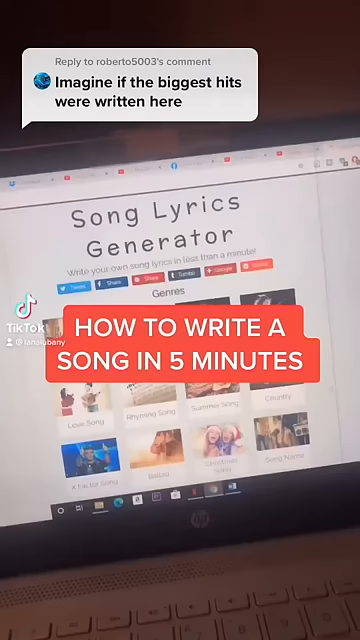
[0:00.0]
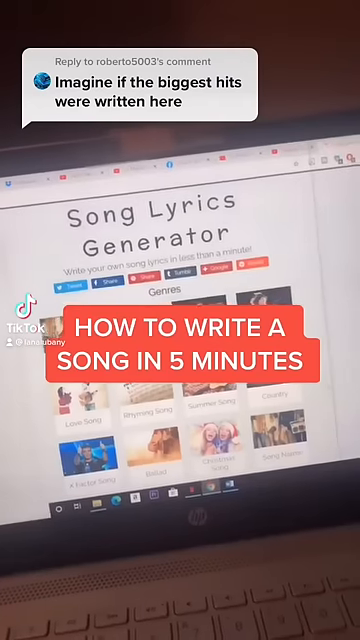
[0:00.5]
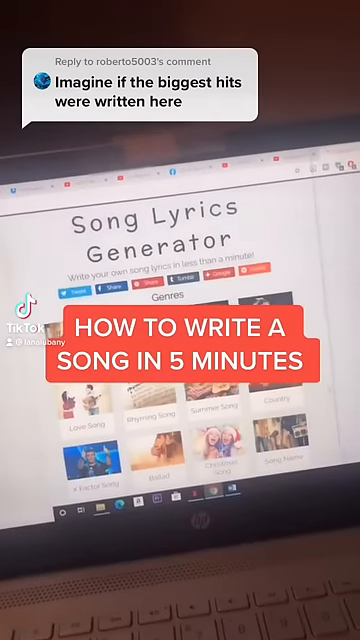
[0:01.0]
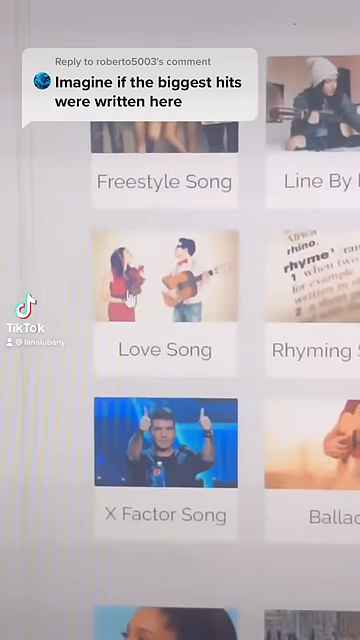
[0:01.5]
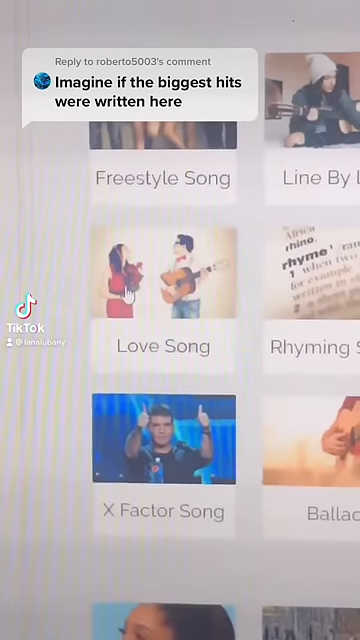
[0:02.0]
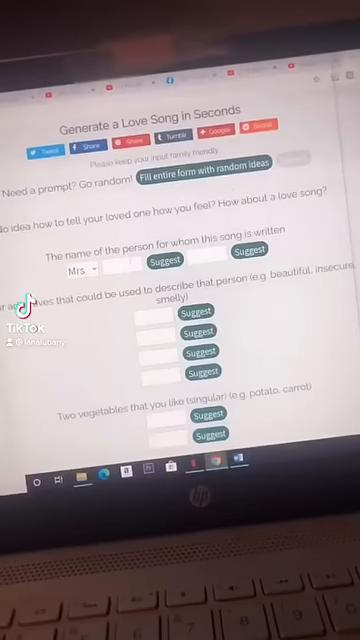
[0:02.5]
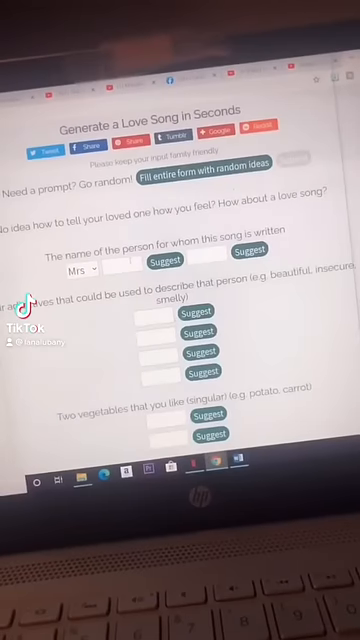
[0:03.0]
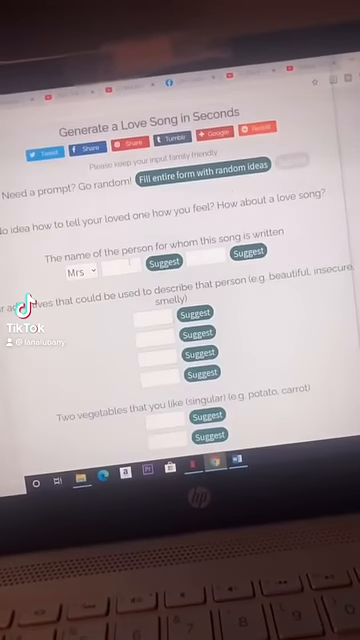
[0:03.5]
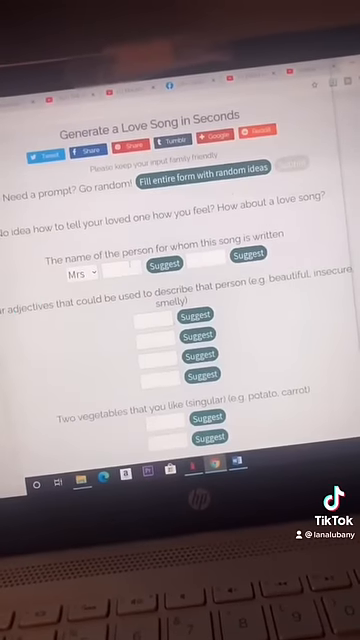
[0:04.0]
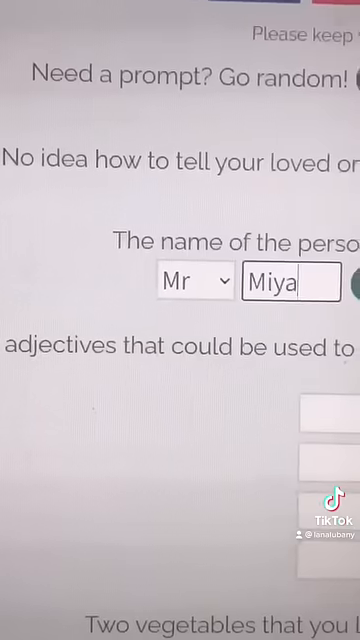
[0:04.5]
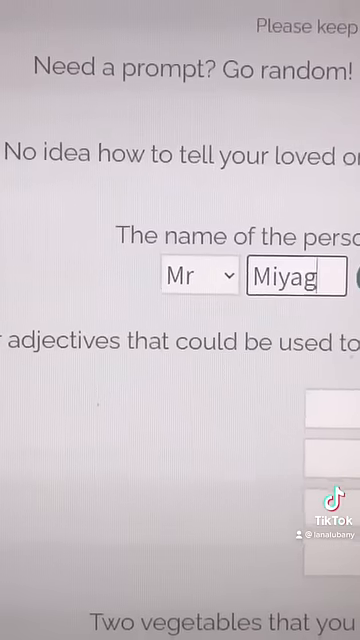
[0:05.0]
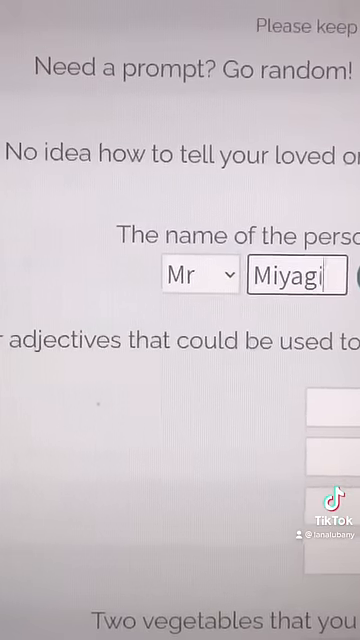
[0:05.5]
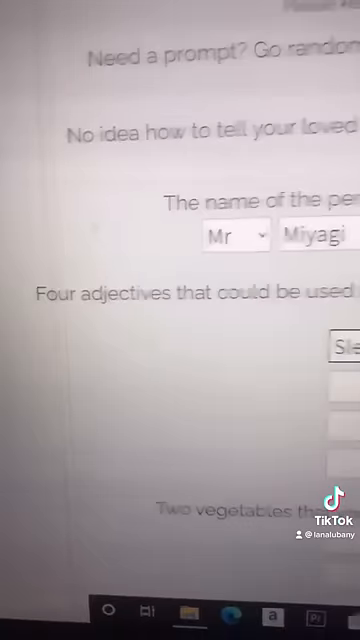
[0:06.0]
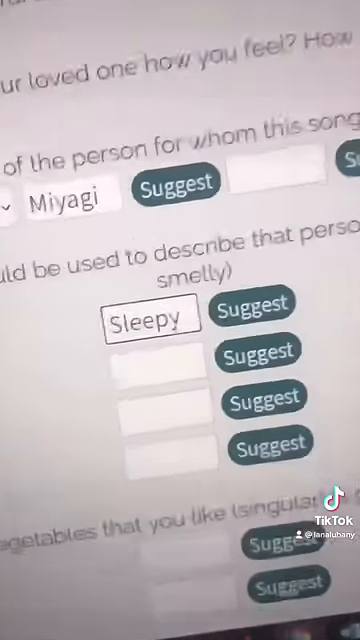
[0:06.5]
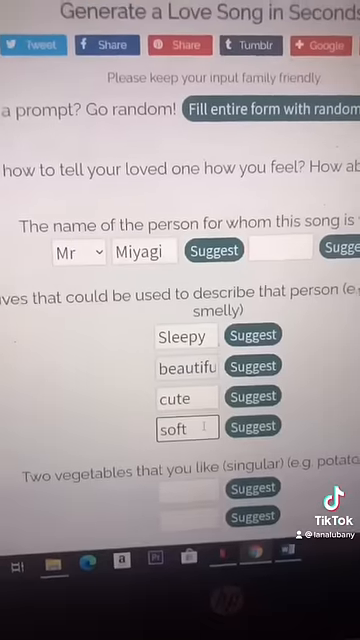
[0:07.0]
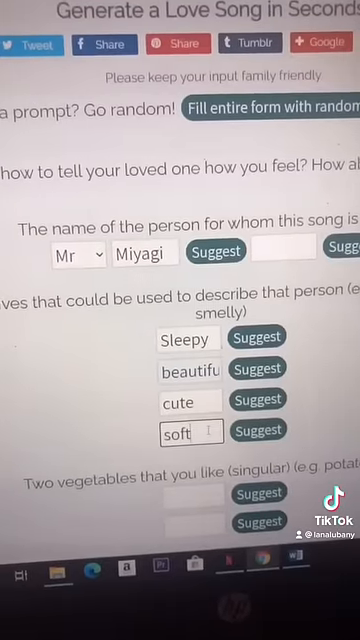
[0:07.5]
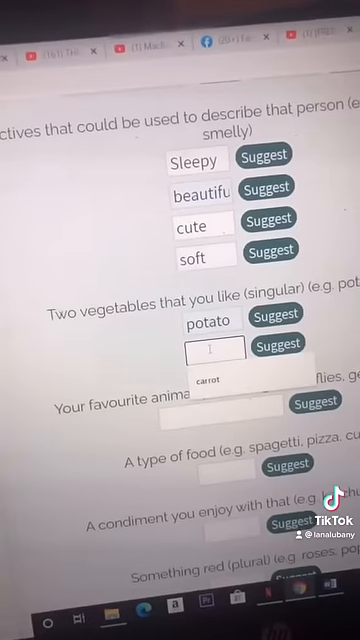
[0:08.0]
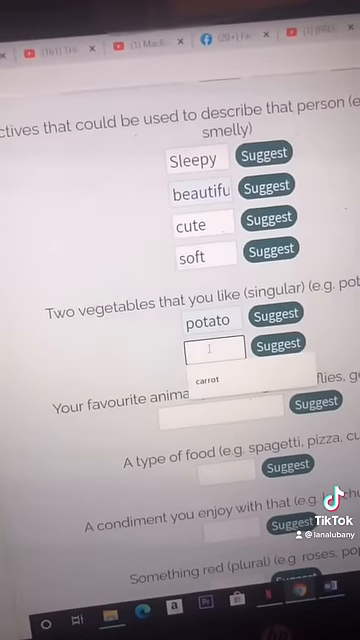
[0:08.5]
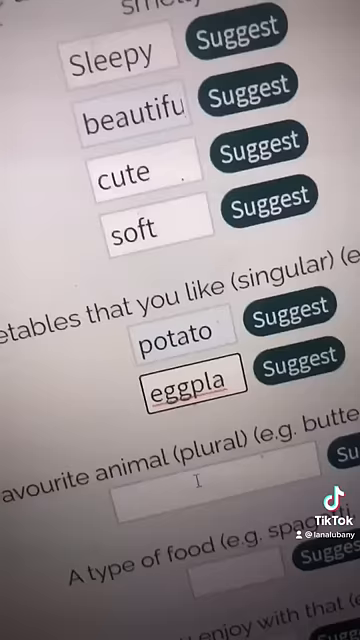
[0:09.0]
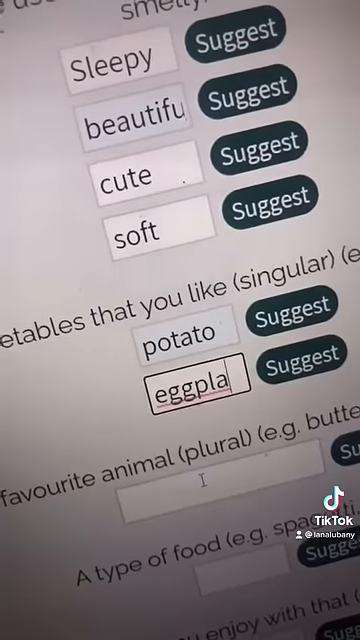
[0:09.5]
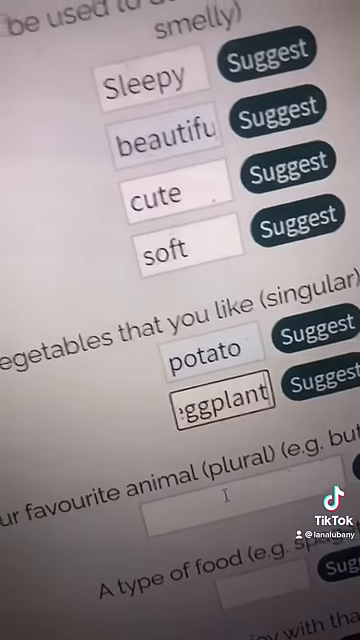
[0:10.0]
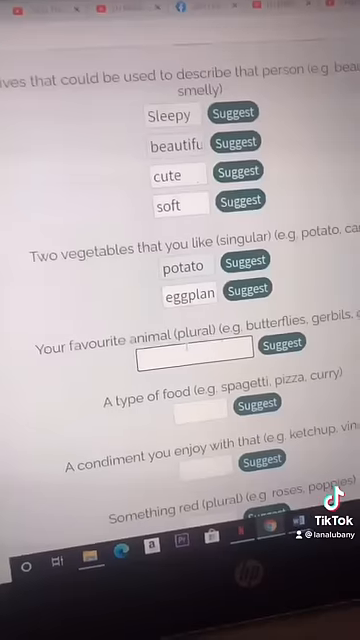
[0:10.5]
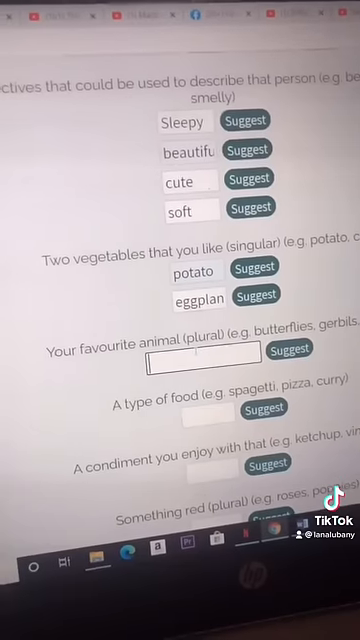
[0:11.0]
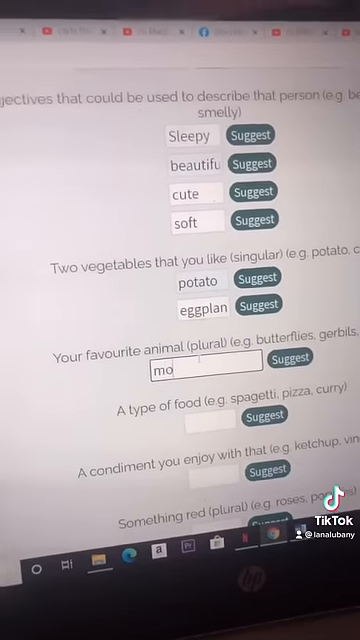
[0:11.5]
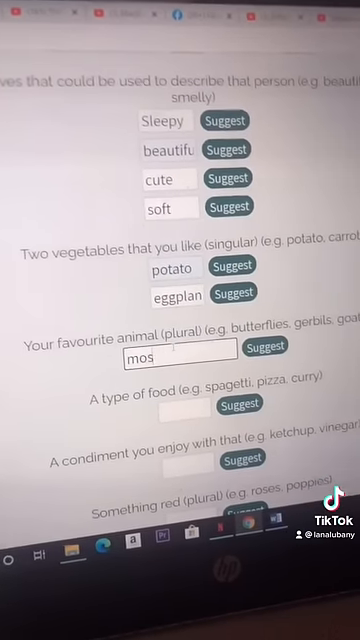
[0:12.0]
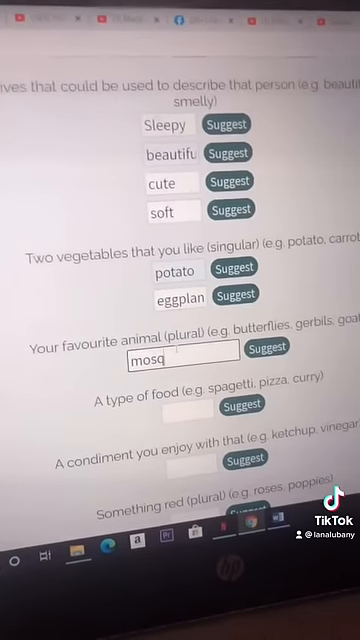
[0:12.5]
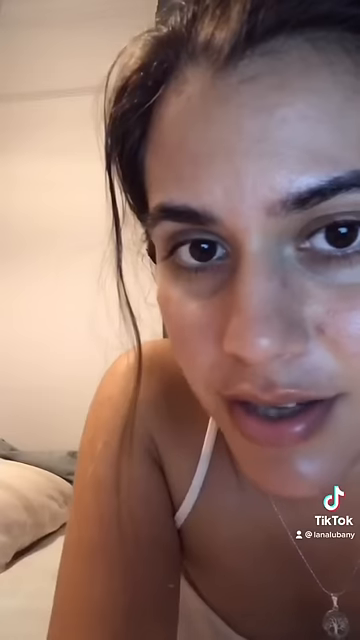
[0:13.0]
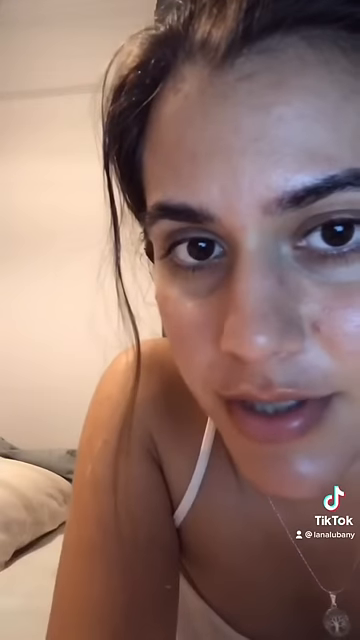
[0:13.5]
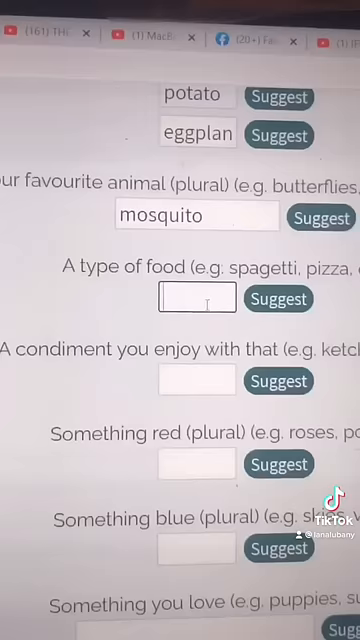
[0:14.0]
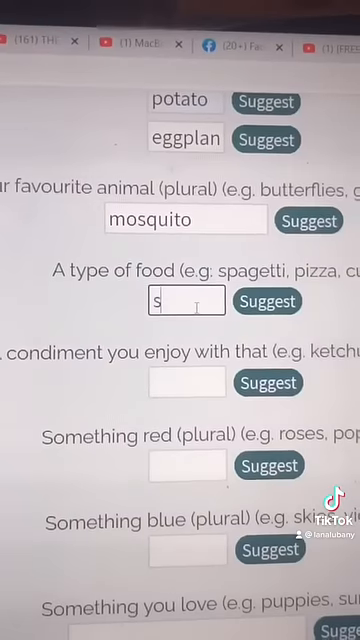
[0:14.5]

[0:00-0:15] What looks like a TikTok video consists of roughly edited-together clips of a computer screen, apparently showing how to use a song lyric generator, an app or software. A woman with pimples, wearing a tank top and lying down, appears briefly; otherwise the video is shots of the screen.